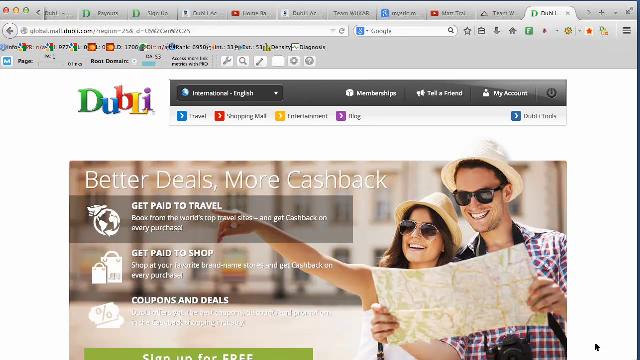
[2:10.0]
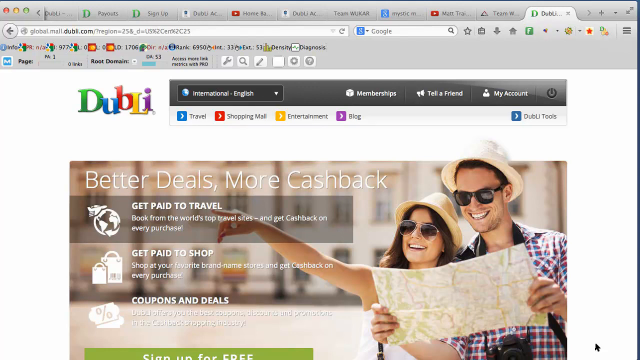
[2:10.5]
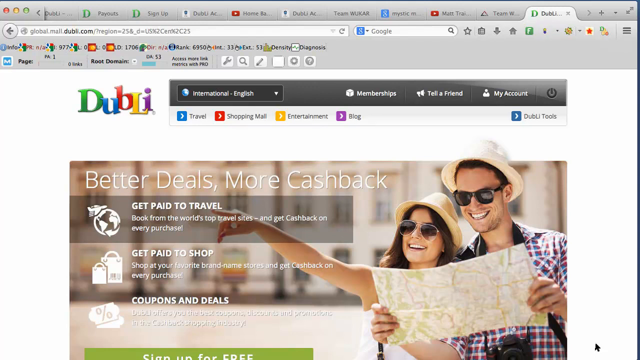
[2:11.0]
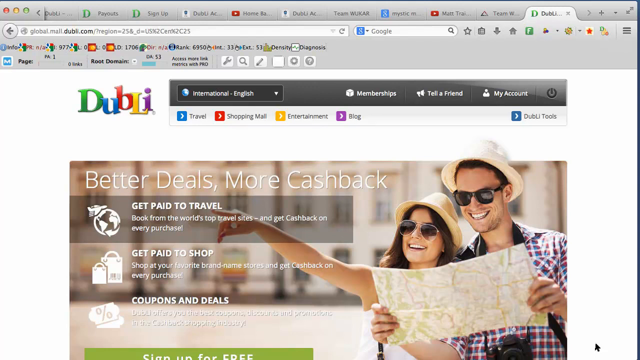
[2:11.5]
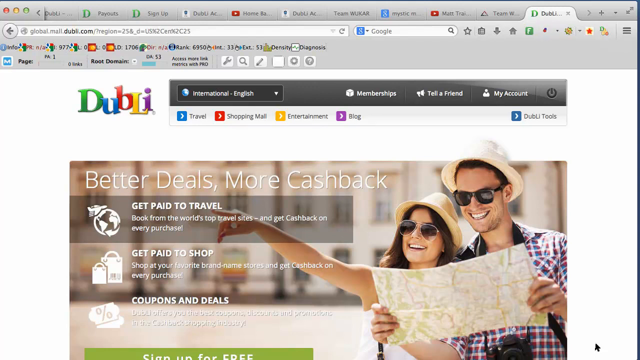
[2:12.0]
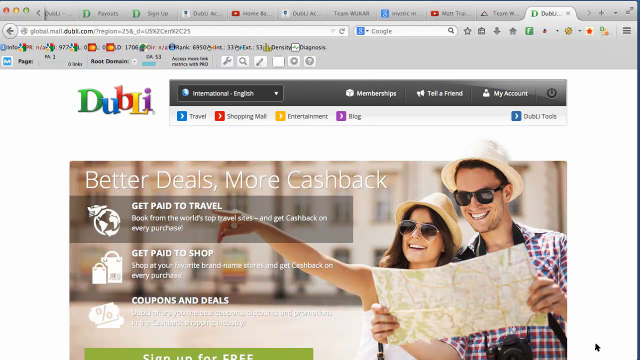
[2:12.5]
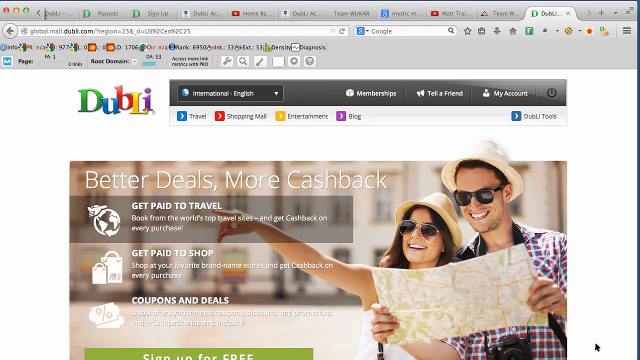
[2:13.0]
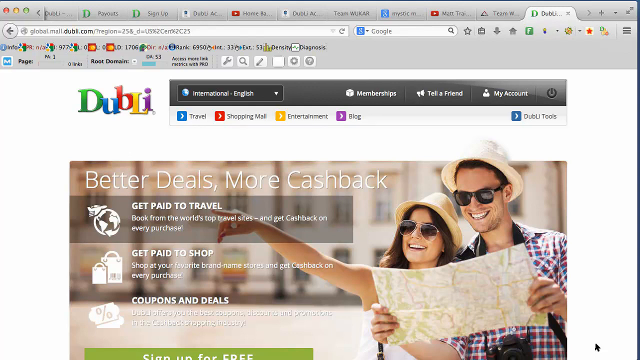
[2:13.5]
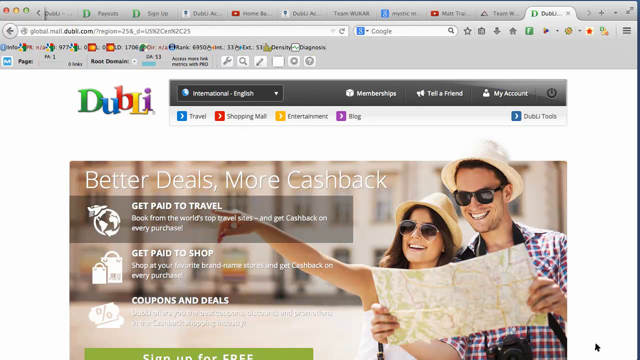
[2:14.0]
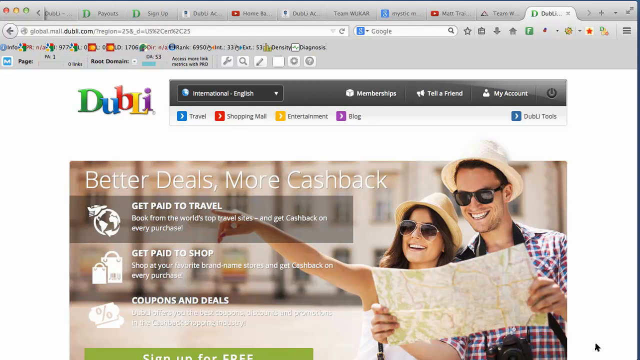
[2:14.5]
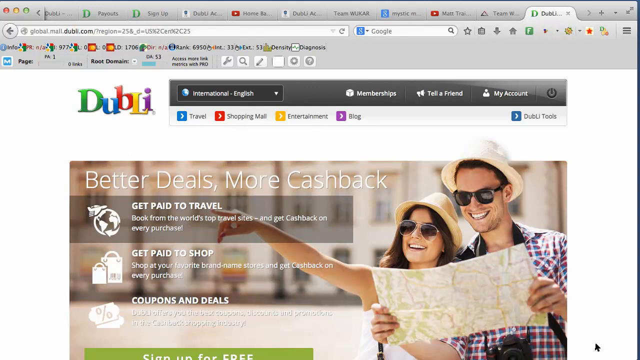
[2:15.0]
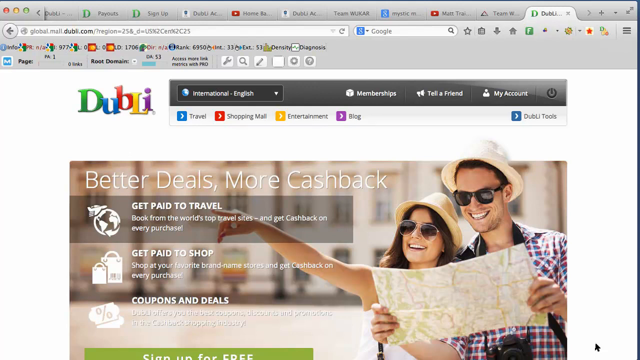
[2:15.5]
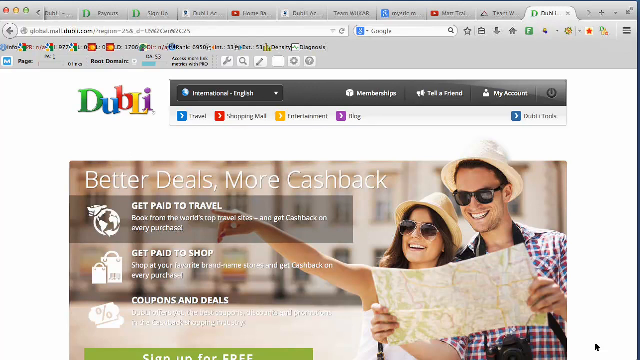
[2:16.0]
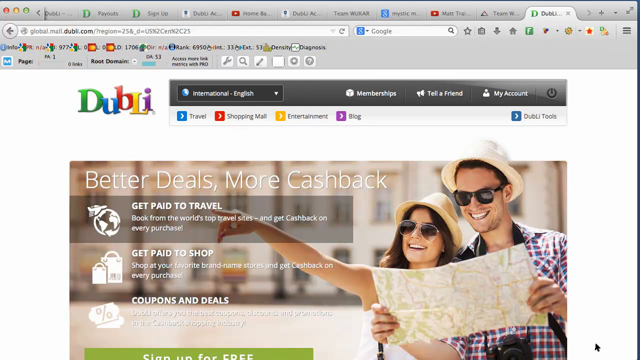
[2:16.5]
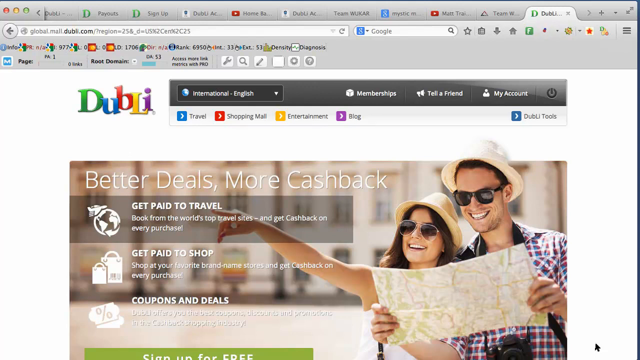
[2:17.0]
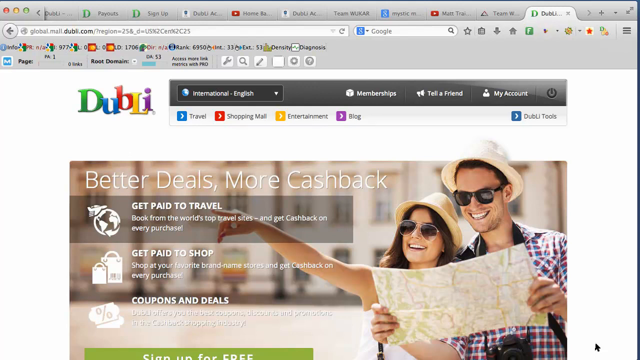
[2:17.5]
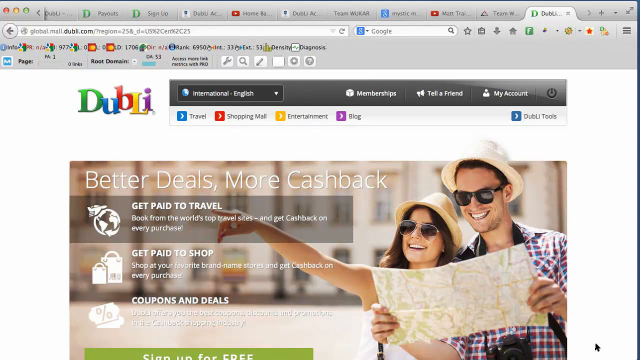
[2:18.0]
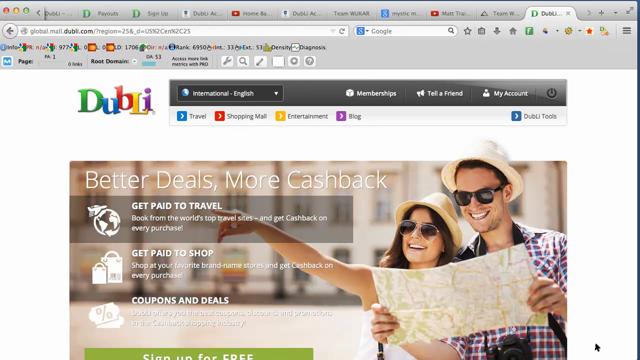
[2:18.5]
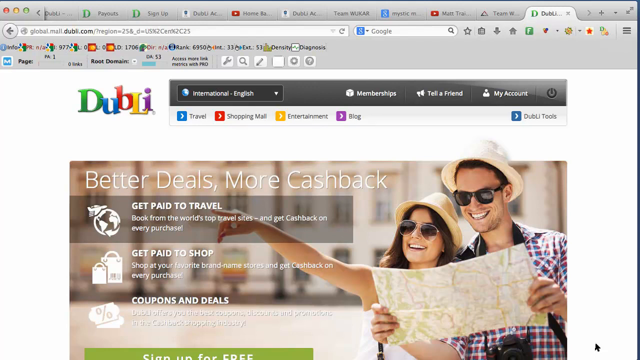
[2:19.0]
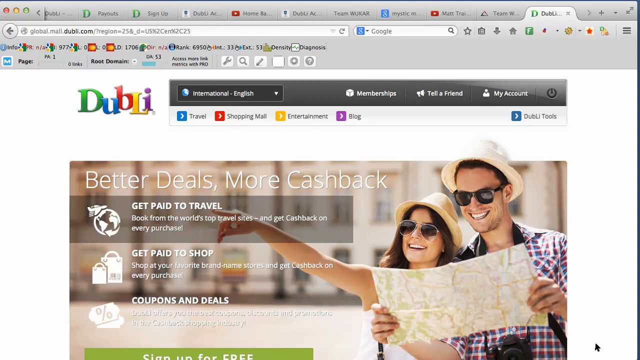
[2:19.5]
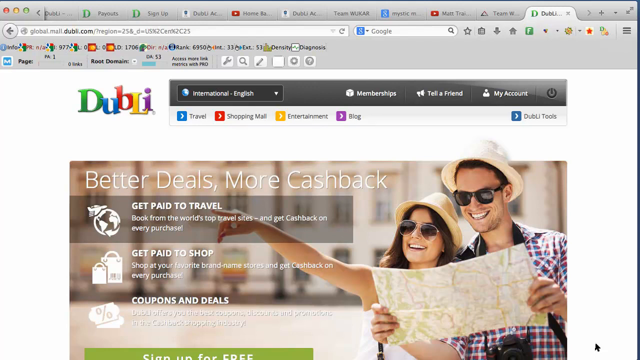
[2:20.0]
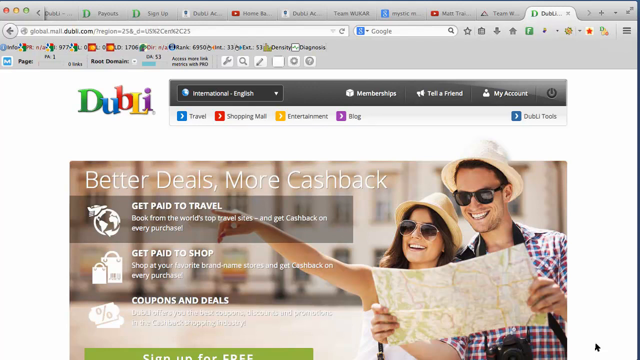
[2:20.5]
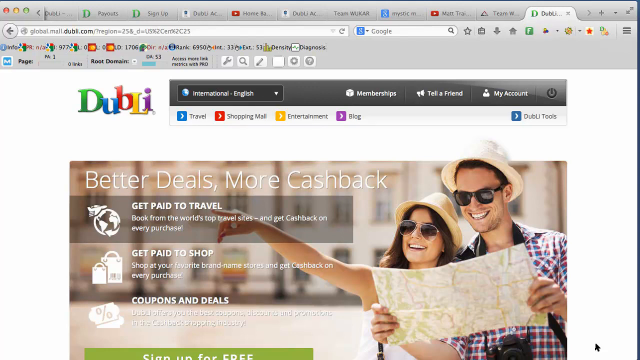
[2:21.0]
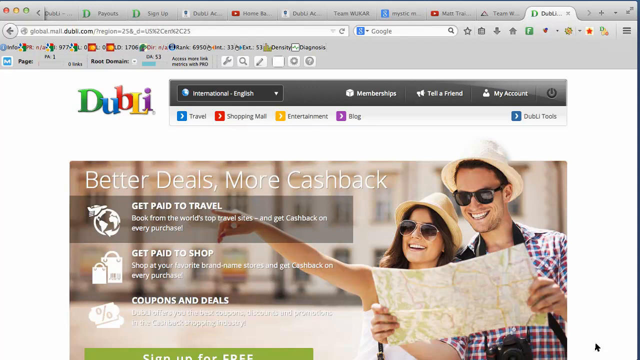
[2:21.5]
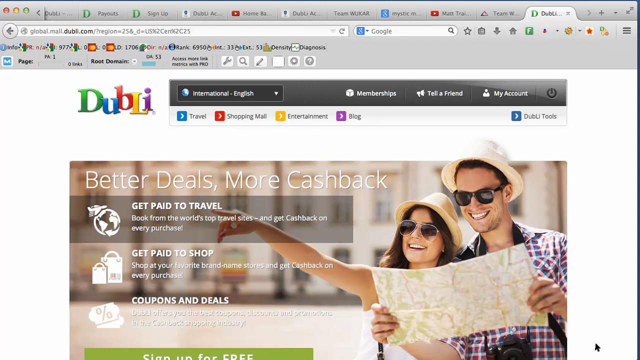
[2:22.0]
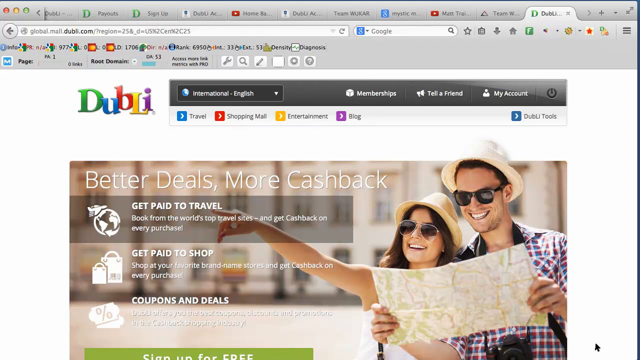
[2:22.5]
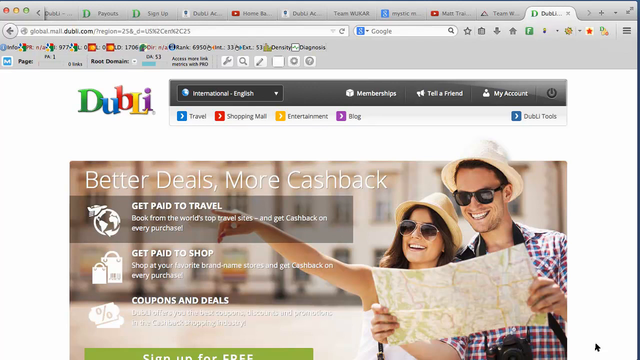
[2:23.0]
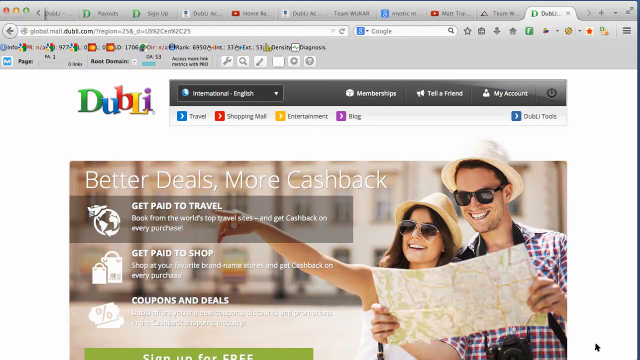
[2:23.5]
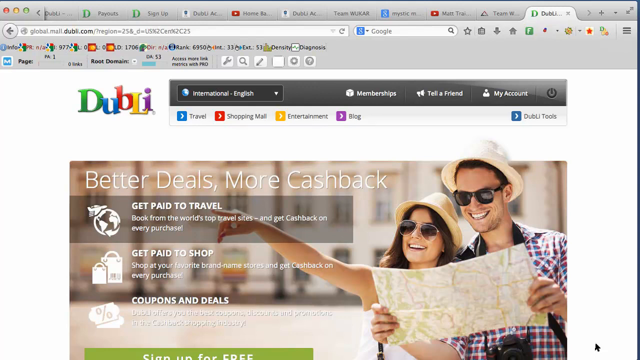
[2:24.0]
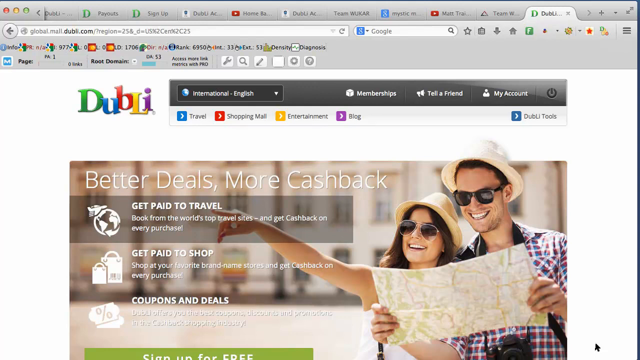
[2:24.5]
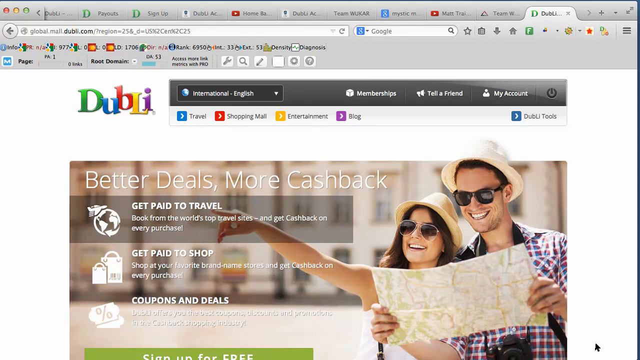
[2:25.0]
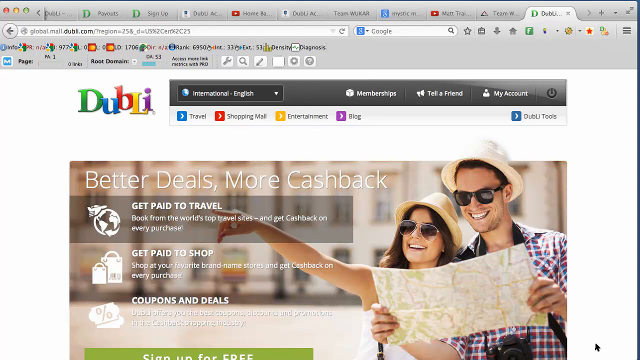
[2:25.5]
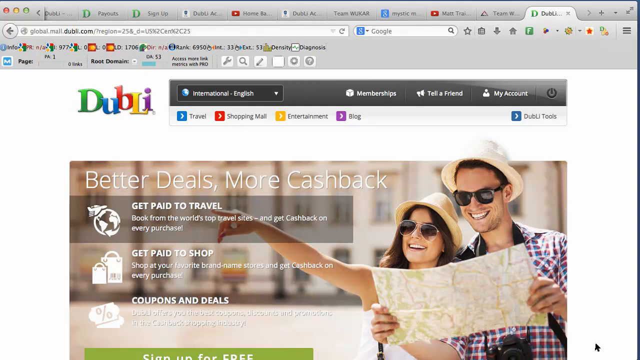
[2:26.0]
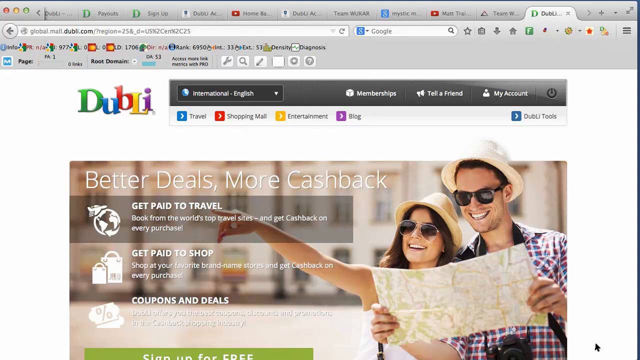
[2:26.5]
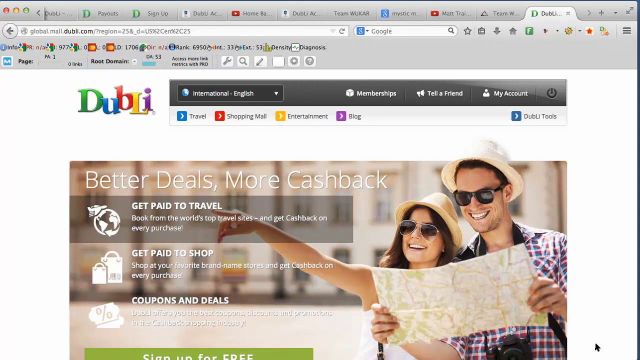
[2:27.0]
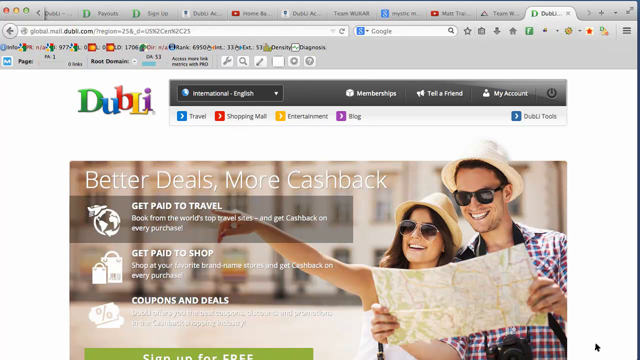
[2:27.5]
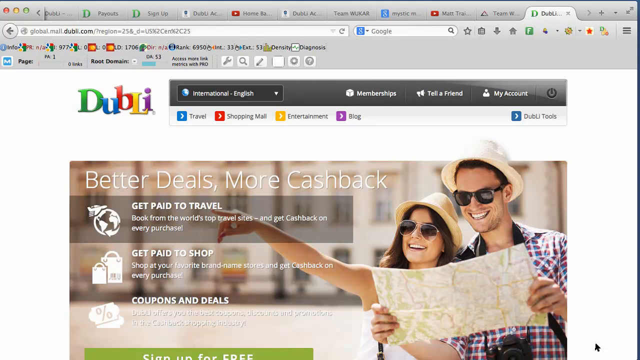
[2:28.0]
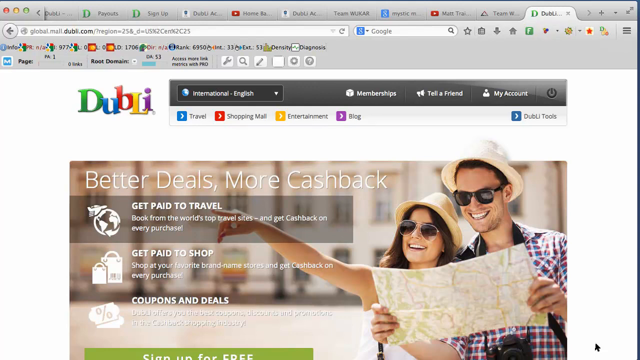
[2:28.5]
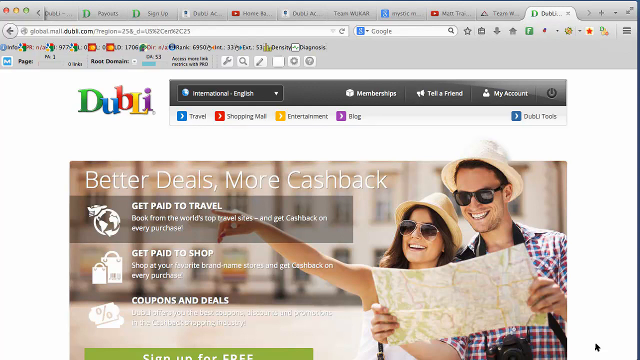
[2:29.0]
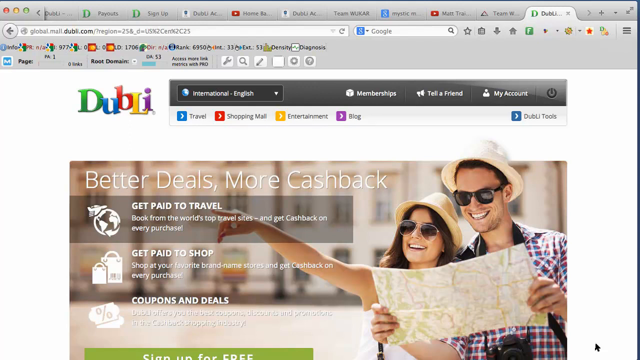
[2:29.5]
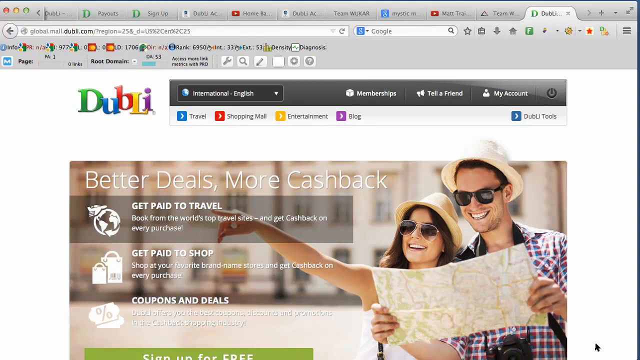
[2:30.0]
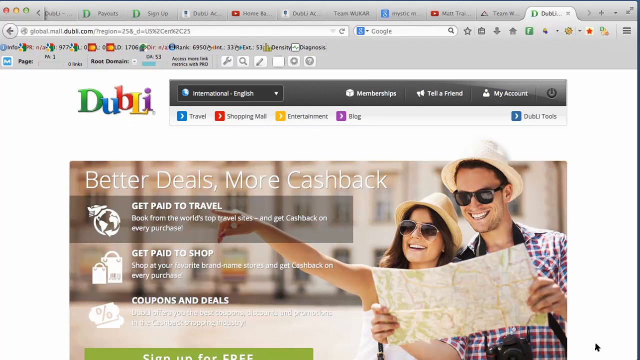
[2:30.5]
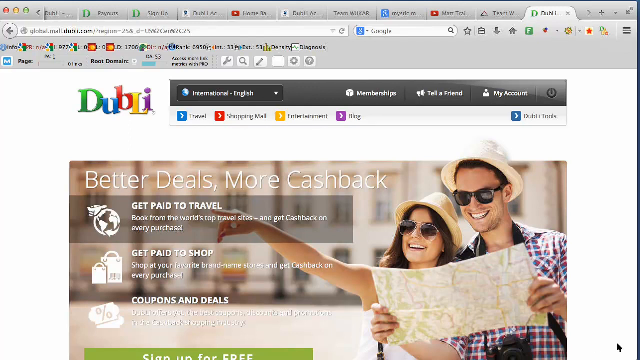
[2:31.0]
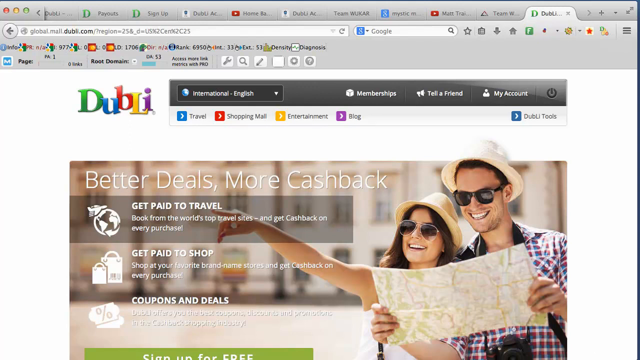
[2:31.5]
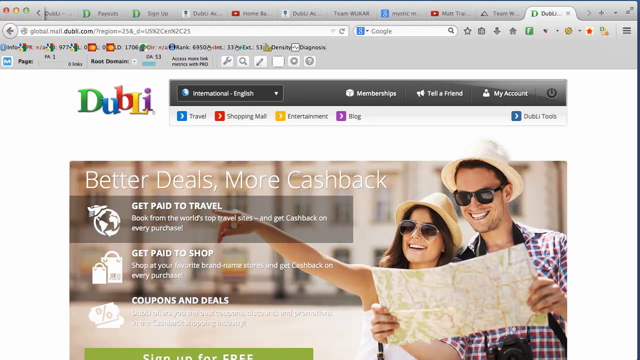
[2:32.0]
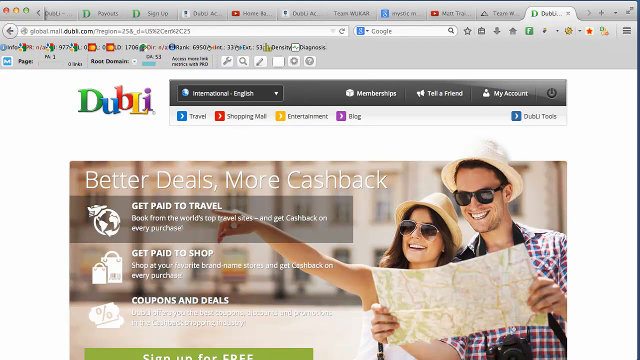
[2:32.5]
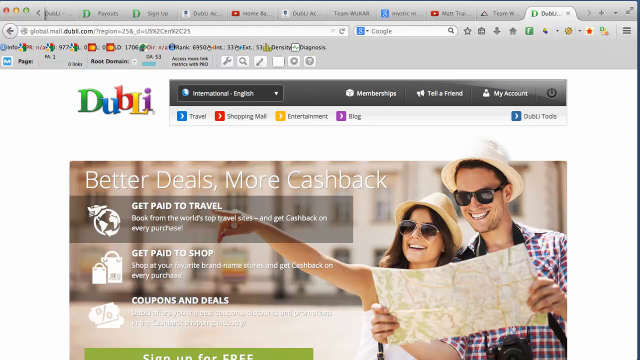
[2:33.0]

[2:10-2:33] The company name, DUBLI, is shown in color: a green D, blue U, red B, yellow L and purple I. Text reads "better deals more cash back," "get paid to travel," "book from the world's top travel sites and get cash back on every purchase," "get paid to shop," "shop at your favorite brand name stores and get cash back on every purchase," and there is a section reading "coupons and deals." To the right of the text is a couple, a man and a woman. The woman holds up the pointer finger of her right hand, pointing toward the left side of the screen at something not identified. The picture looks like it might have been edited. The man is holding on to a map.